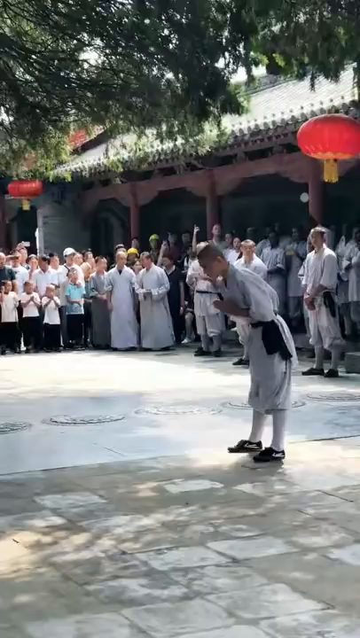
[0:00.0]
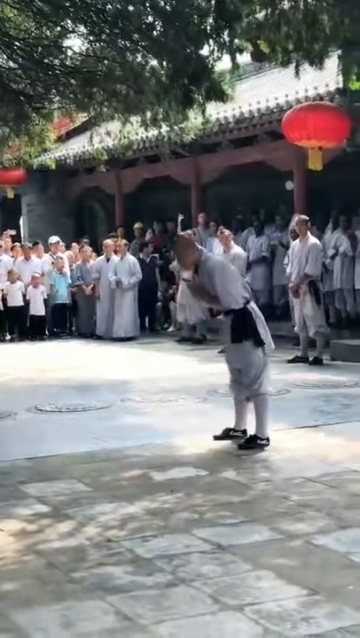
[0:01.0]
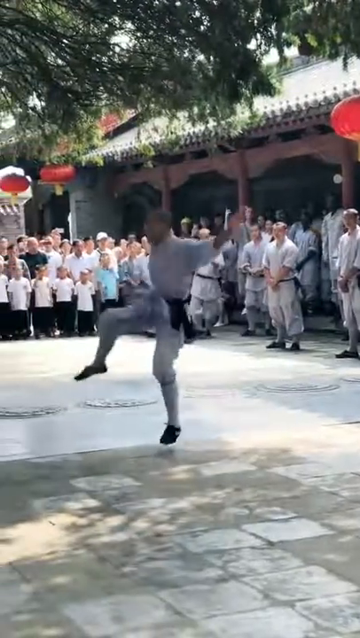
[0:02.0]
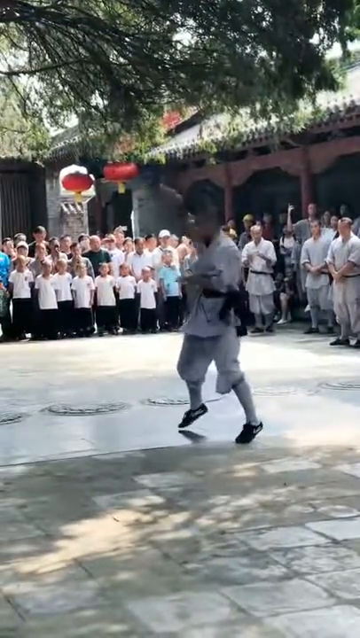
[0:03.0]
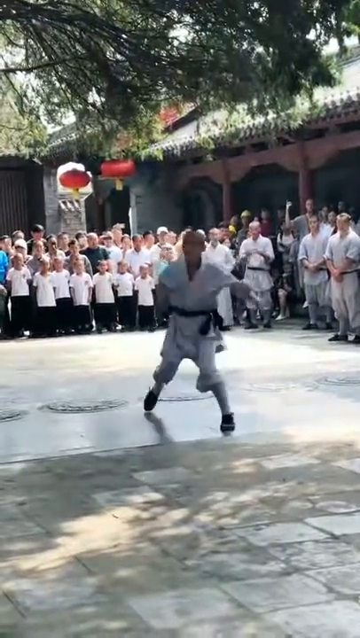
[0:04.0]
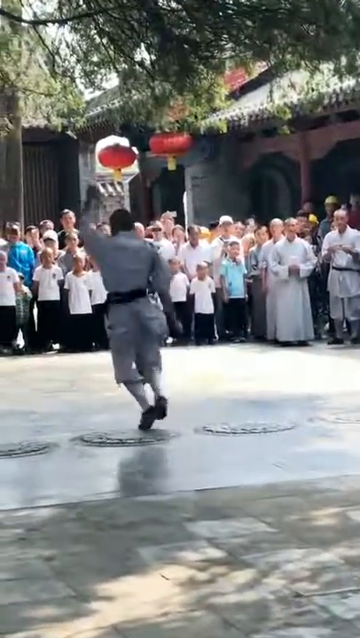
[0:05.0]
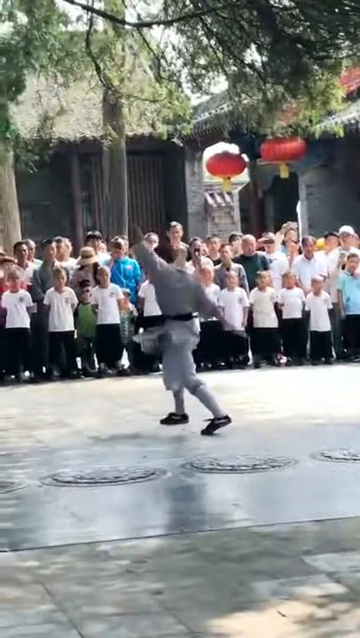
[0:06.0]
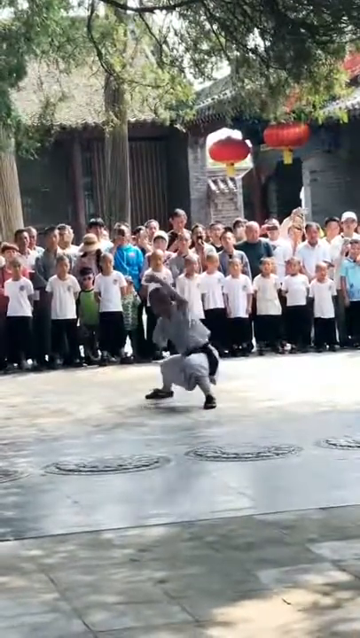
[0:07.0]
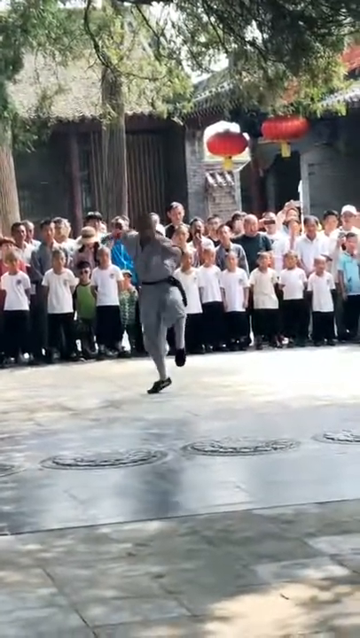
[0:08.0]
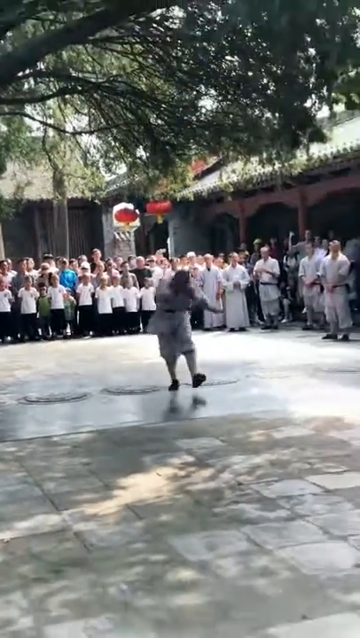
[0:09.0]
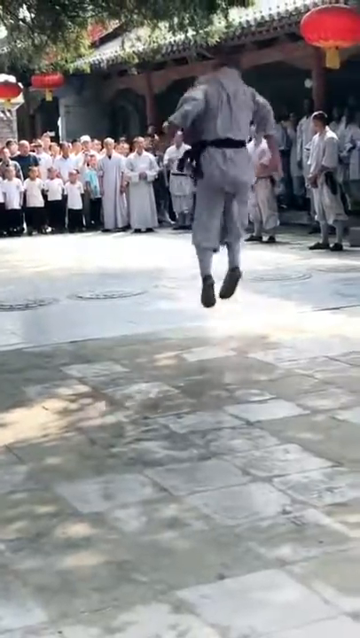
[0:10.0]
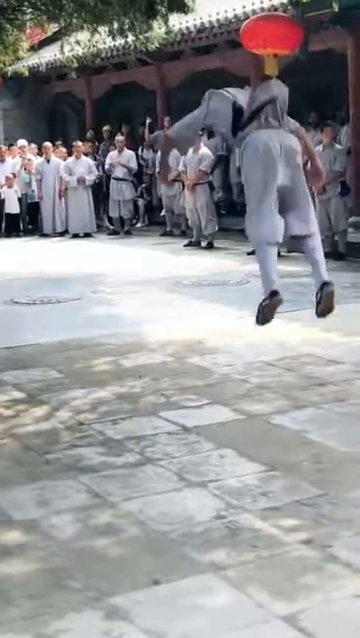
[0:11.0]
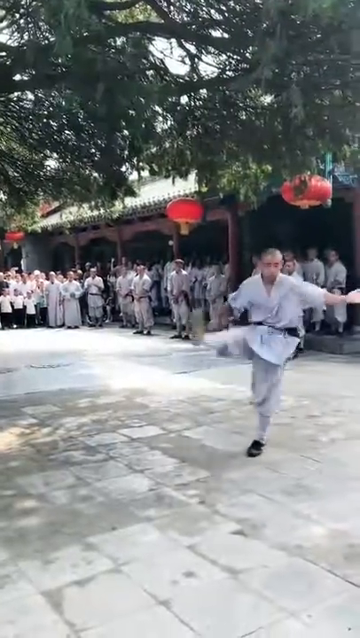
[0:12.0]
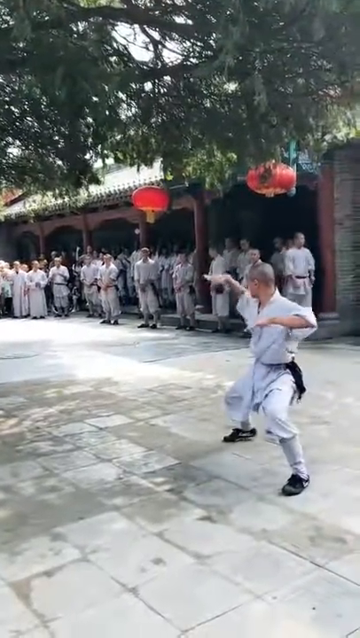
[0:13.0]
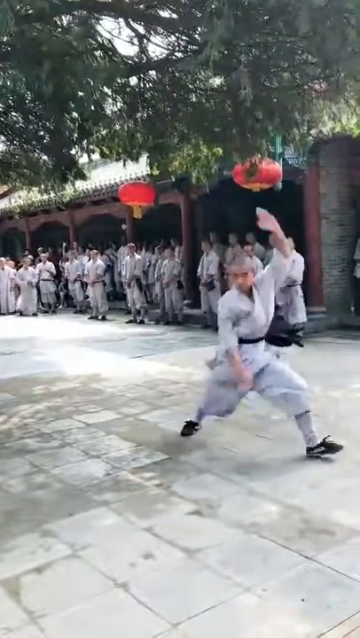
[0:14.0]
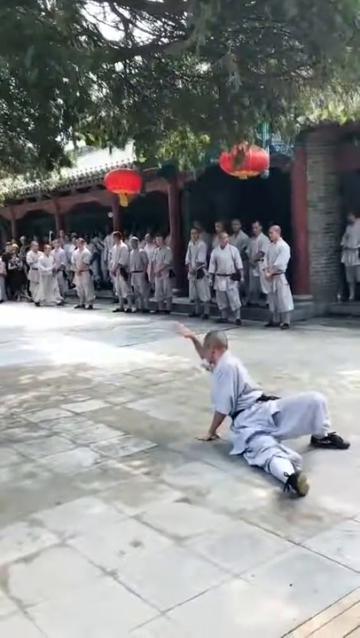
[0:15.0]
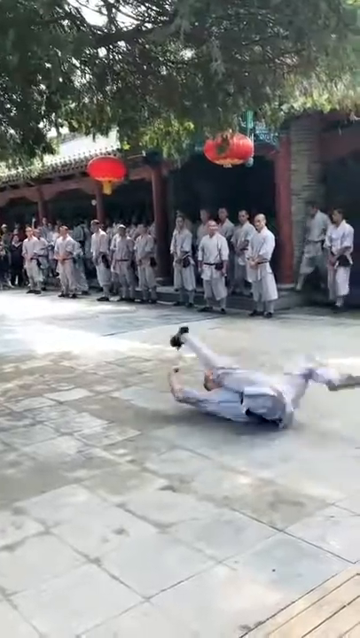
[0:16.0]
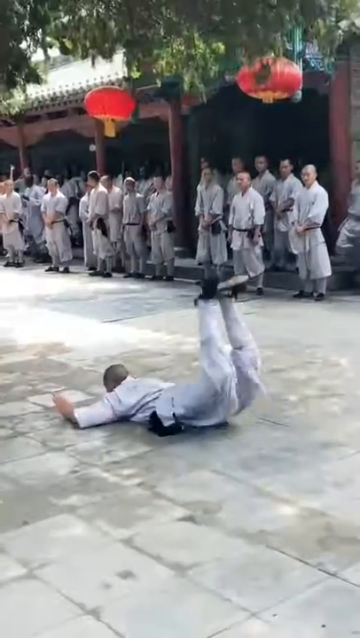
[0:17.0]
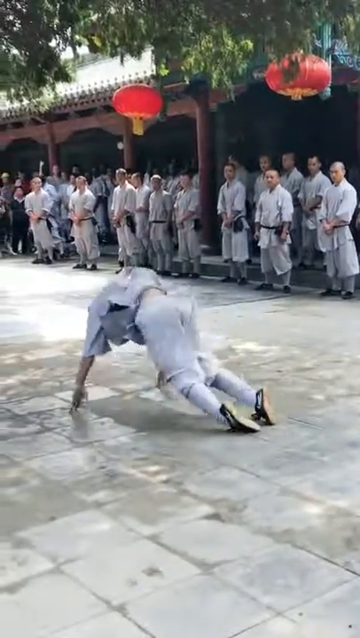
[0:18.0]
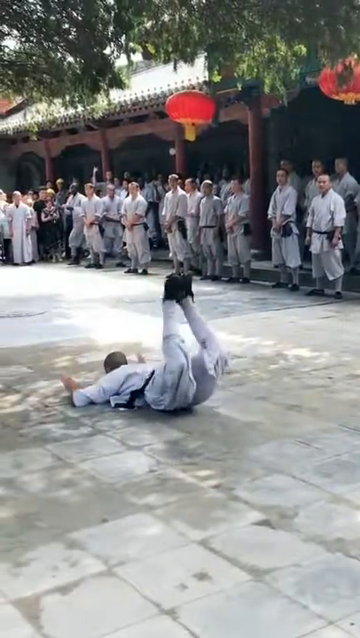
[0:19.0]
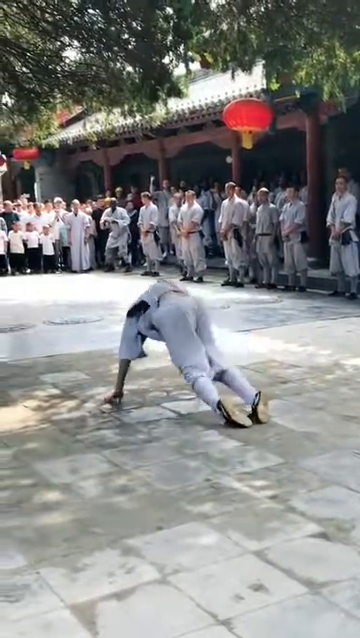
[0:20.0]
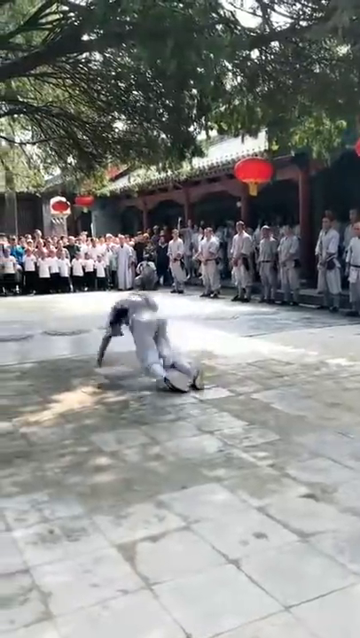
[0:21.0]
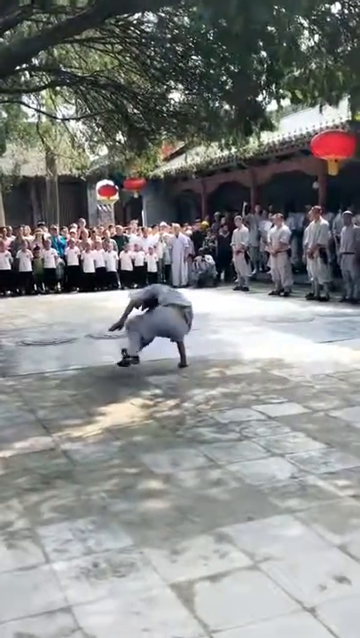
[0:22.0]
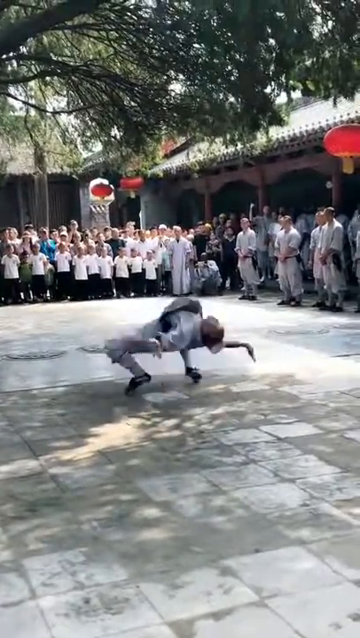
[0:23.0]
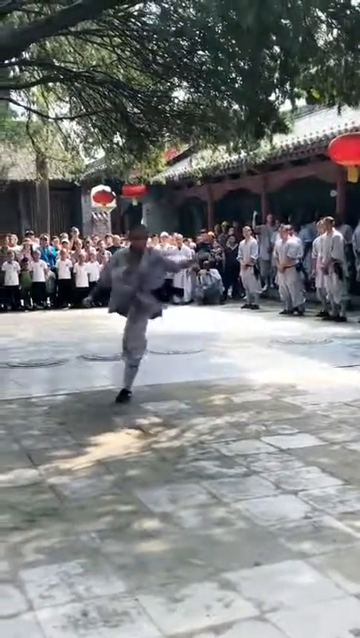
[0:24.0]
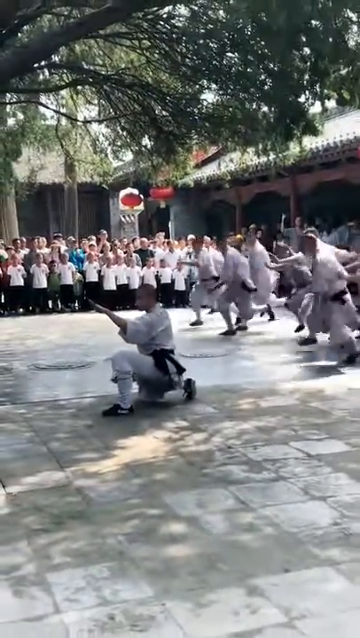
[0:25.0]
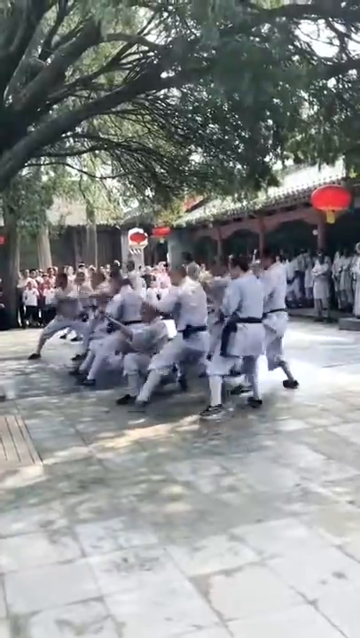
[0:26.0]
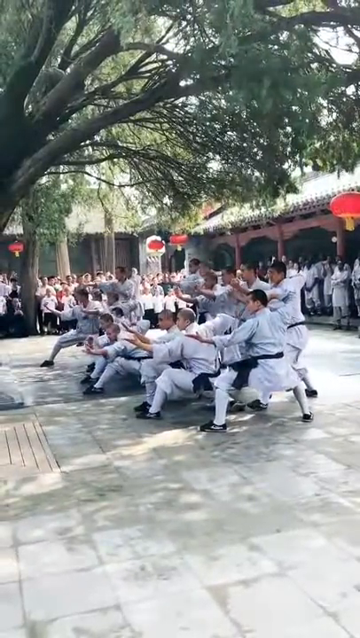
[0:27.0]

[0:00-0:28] The video is called Shaoling Kung Fu Snake Fist. A bunch of gray Shaoling apprentices are present, with some of the younger ones wearing white shirts. One man looks like he is dancing, but he kicks his foot up and hits his own hand. He prances, moving his feet and hands a lot, then springs in a circle and uses his foot to kick his hand again. He whirls his hands around like a tornado and strikes some kung fu poses. He runs and does a double gymnastics-like flip, then curls his hands like a snake and hits both hands on the ground. He has one knee up while the other leg is up, and does something like a b-boy style dance. He then does the scorpion dance move about five times before pushing himself up Jackie Chan style.